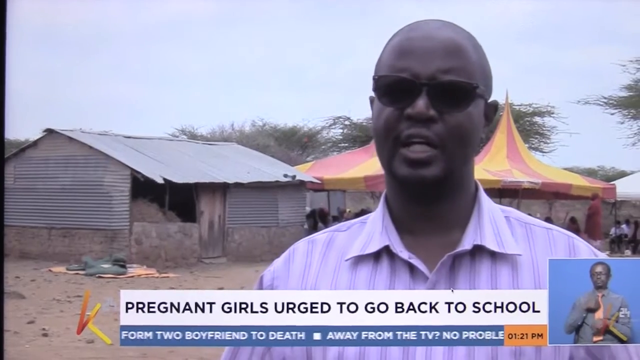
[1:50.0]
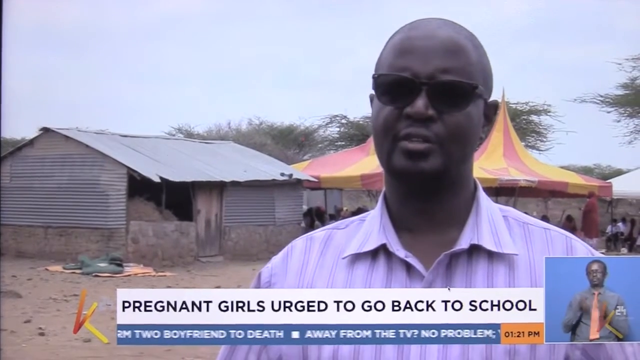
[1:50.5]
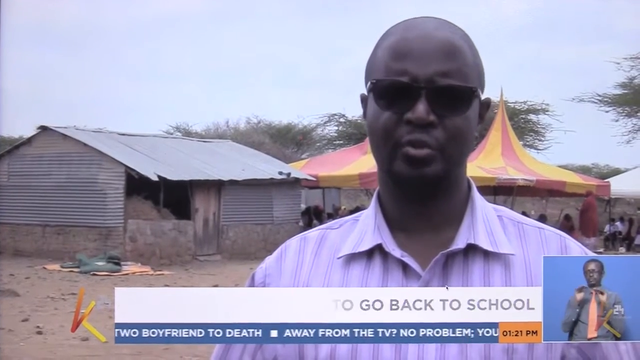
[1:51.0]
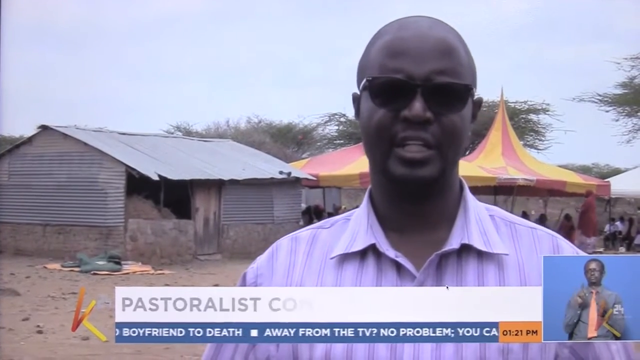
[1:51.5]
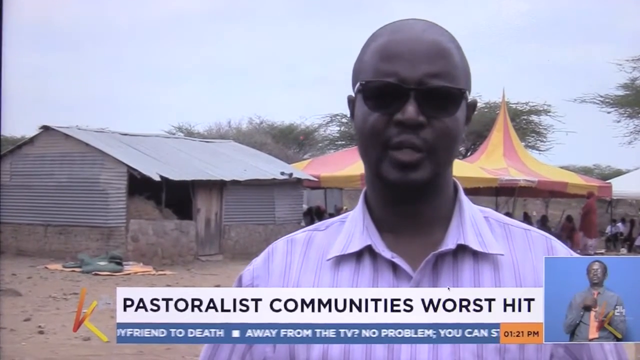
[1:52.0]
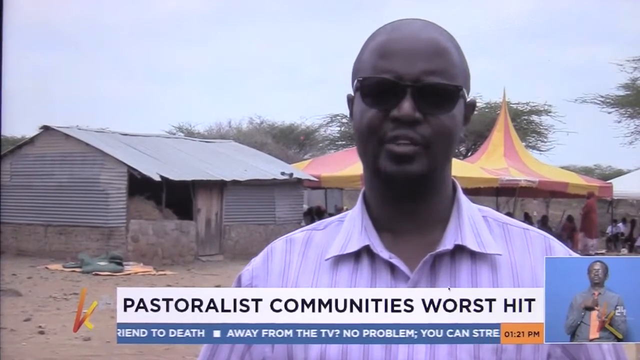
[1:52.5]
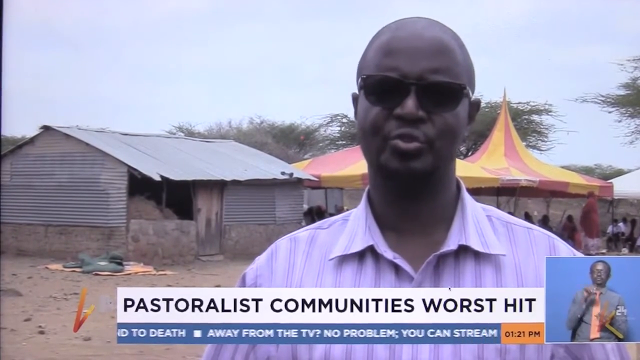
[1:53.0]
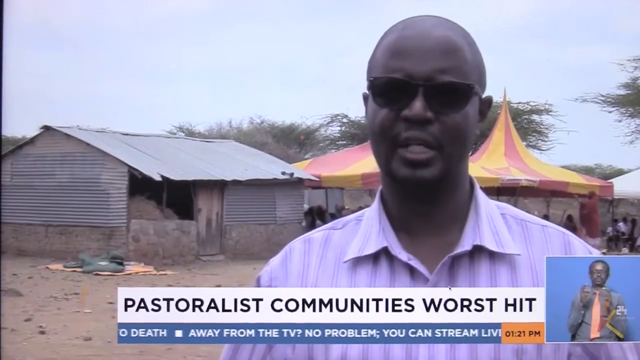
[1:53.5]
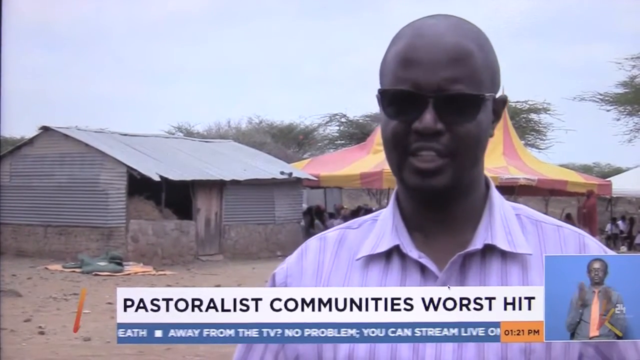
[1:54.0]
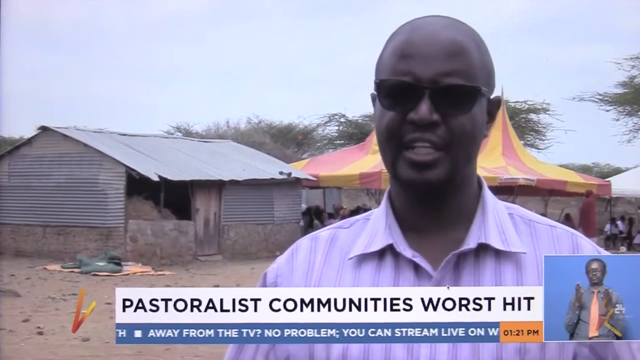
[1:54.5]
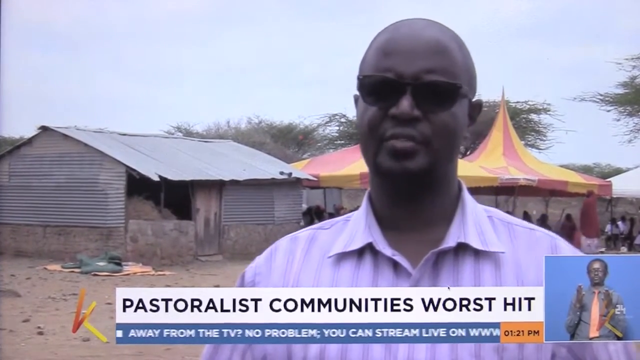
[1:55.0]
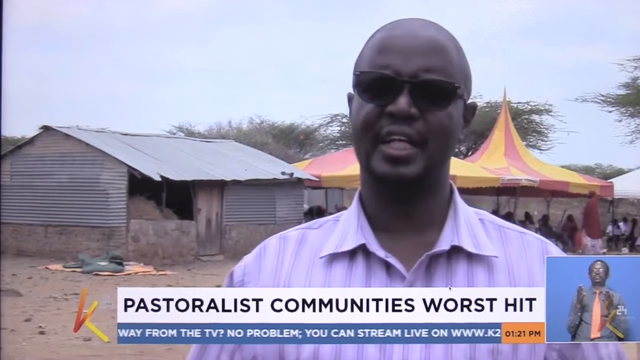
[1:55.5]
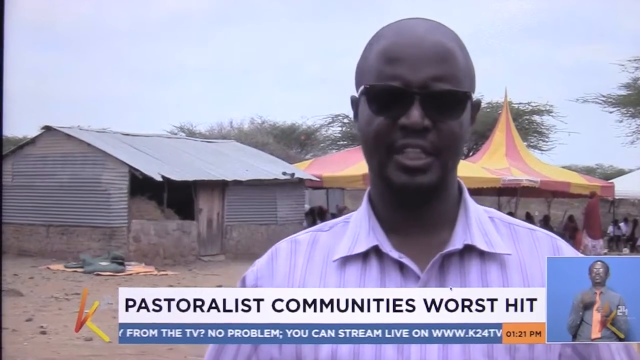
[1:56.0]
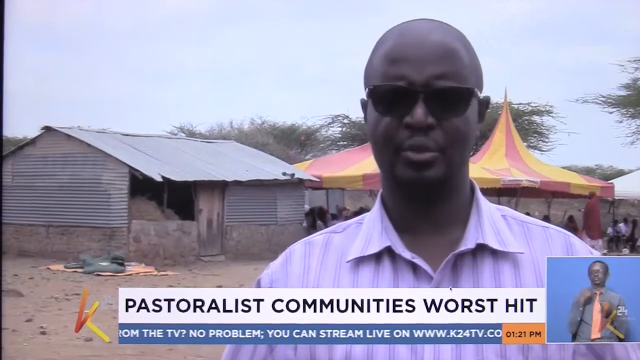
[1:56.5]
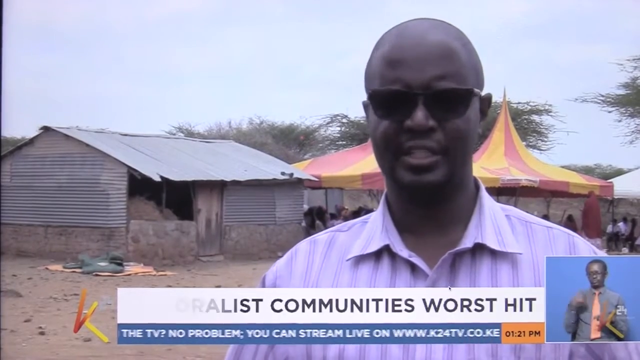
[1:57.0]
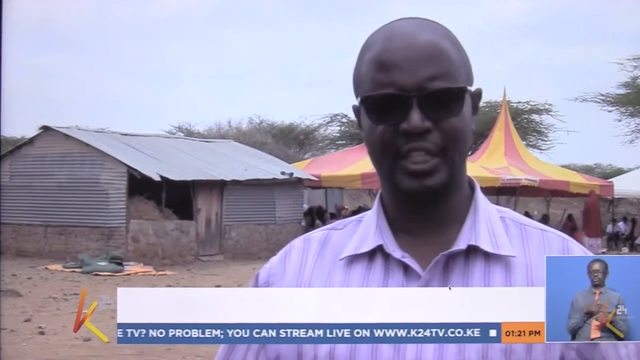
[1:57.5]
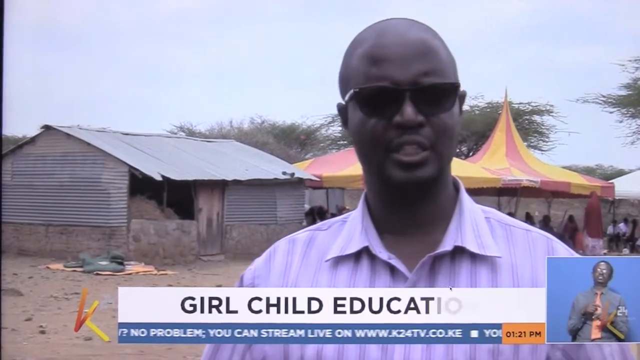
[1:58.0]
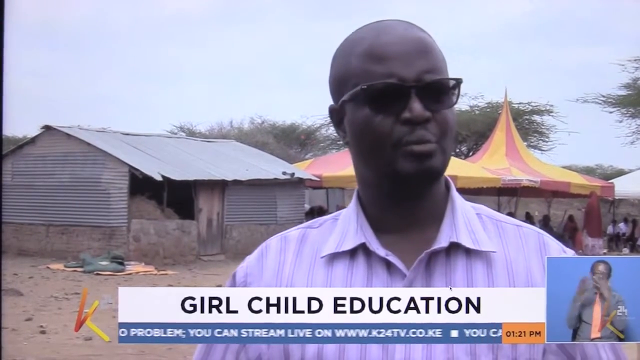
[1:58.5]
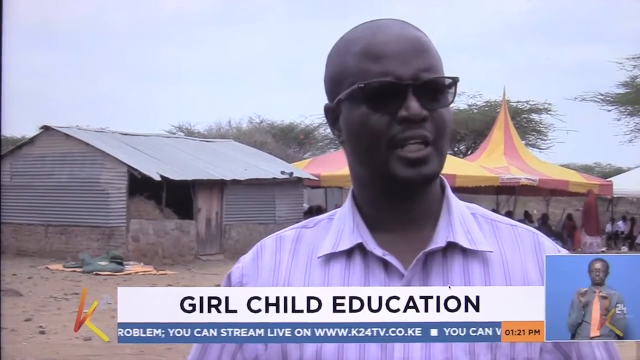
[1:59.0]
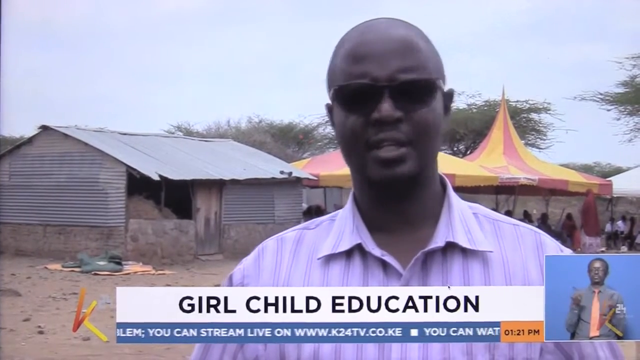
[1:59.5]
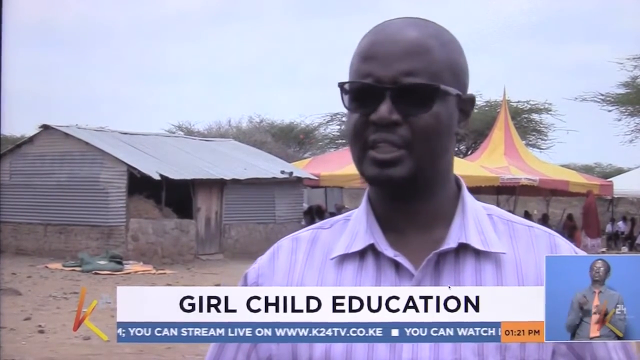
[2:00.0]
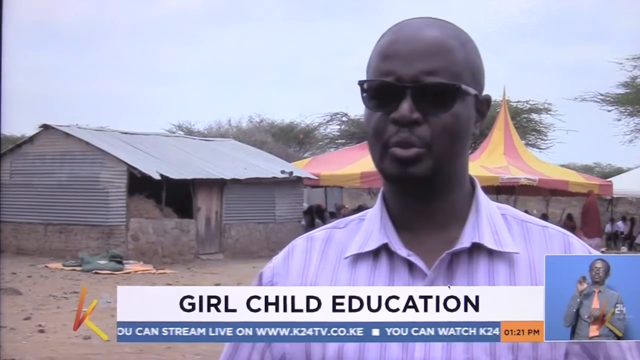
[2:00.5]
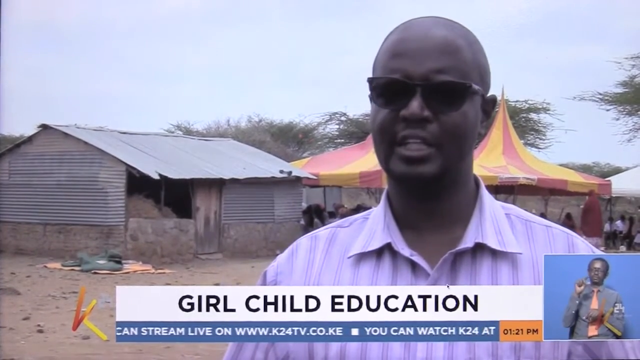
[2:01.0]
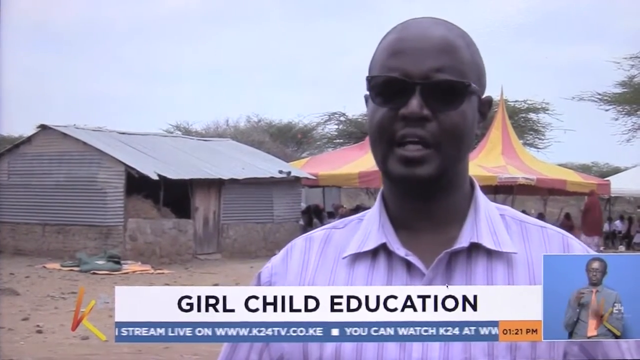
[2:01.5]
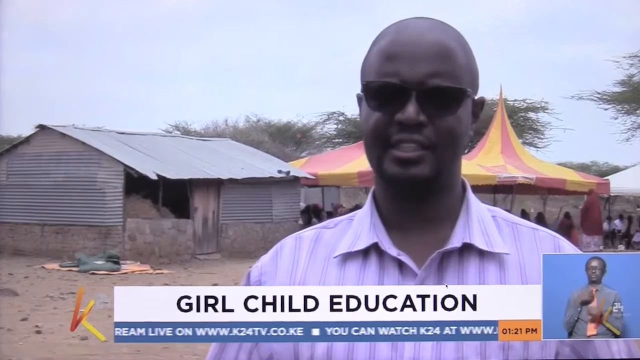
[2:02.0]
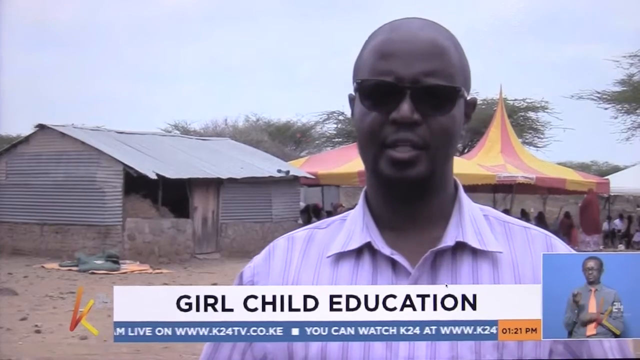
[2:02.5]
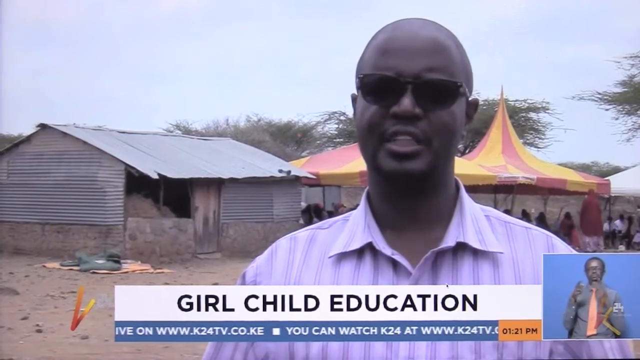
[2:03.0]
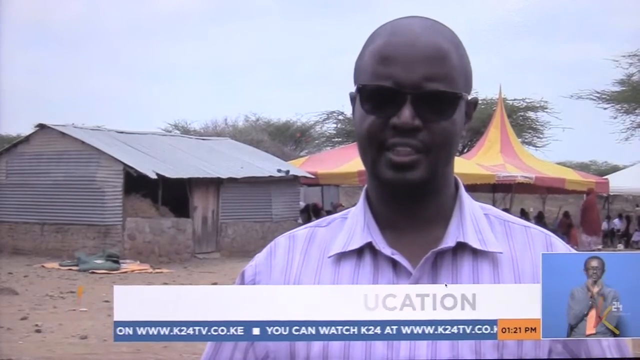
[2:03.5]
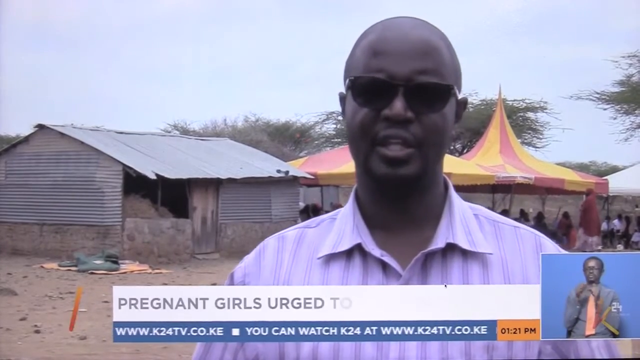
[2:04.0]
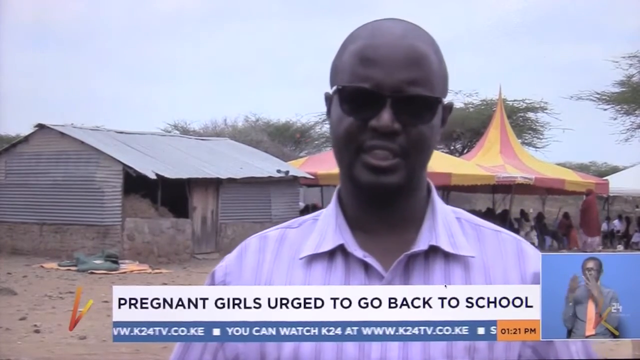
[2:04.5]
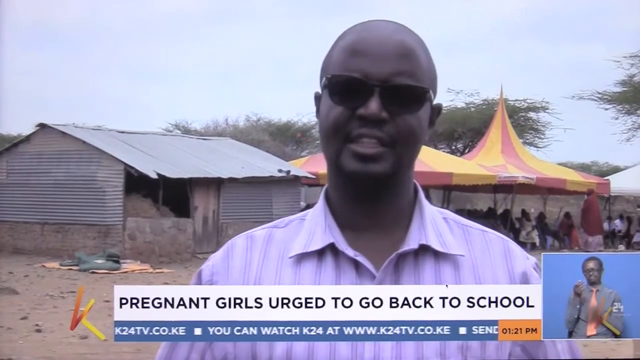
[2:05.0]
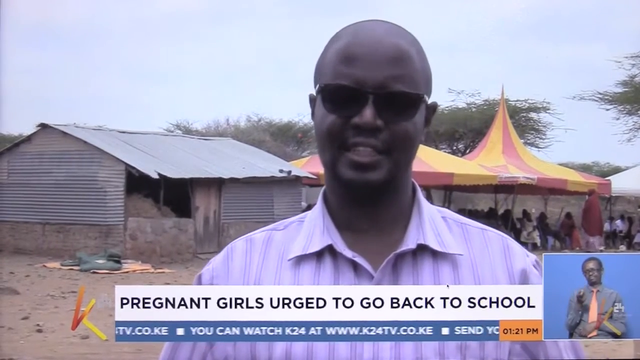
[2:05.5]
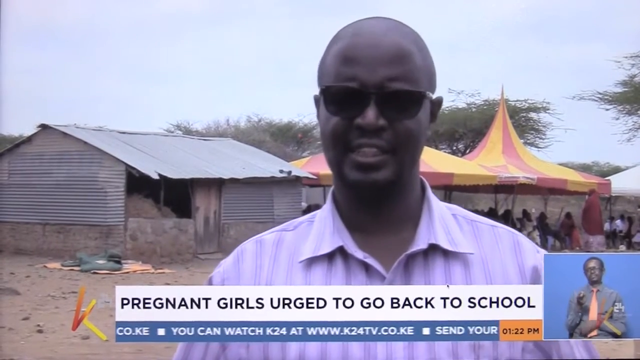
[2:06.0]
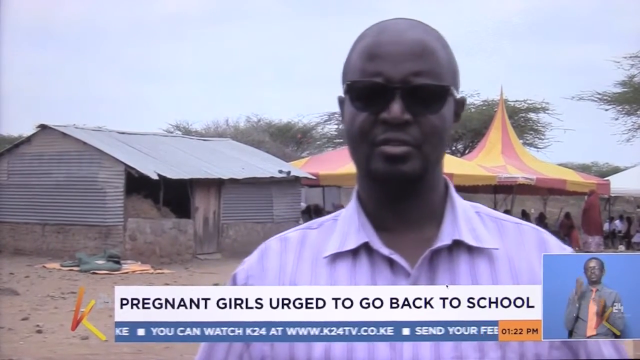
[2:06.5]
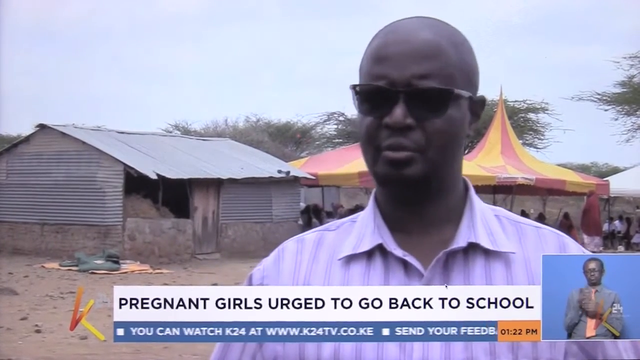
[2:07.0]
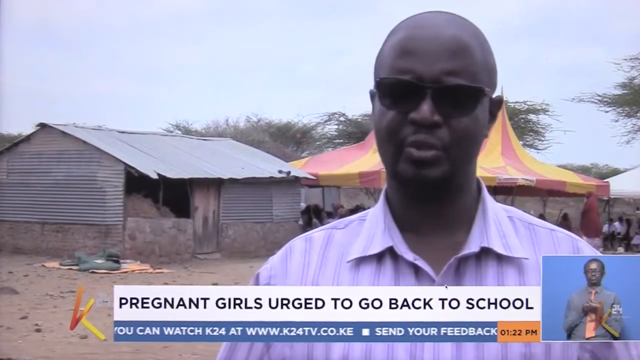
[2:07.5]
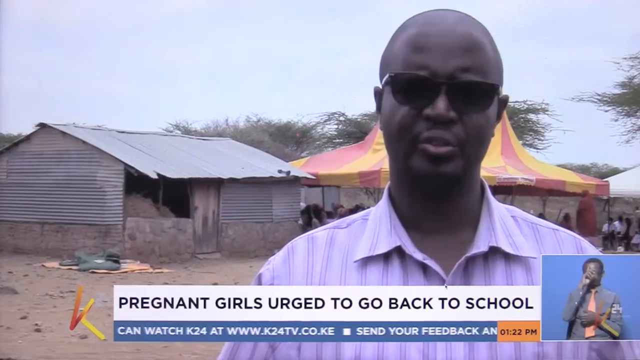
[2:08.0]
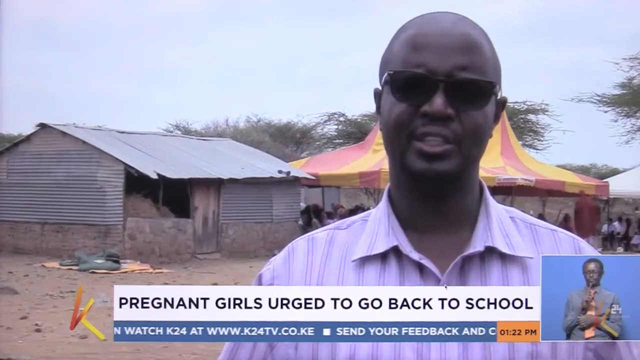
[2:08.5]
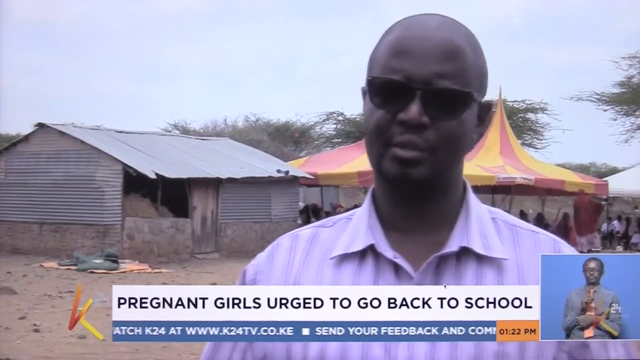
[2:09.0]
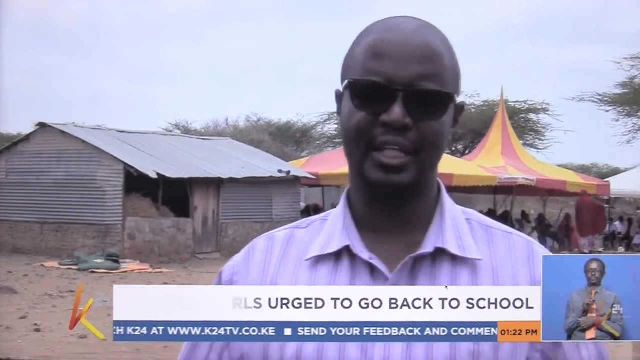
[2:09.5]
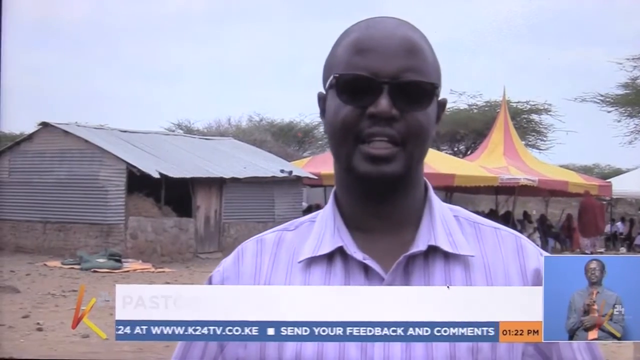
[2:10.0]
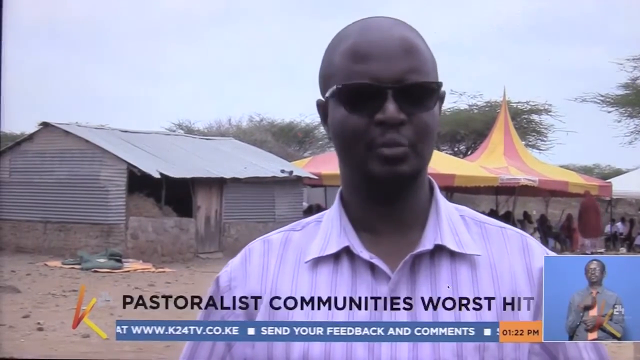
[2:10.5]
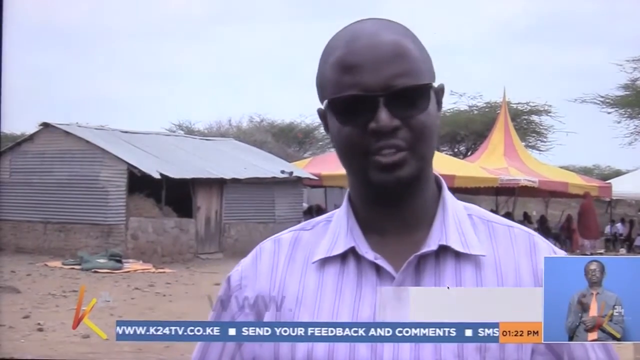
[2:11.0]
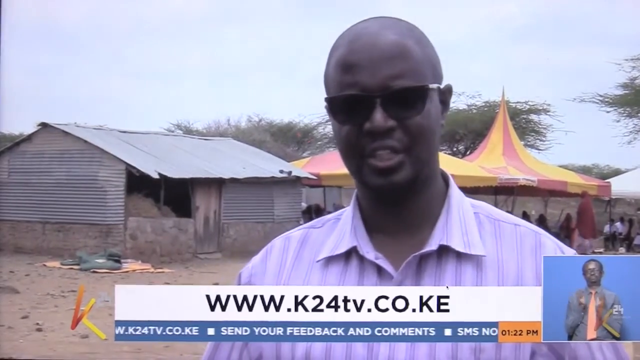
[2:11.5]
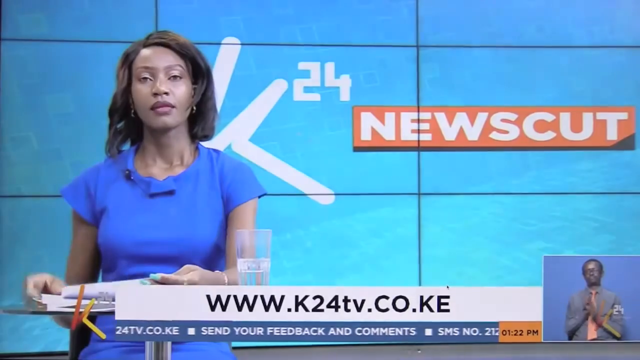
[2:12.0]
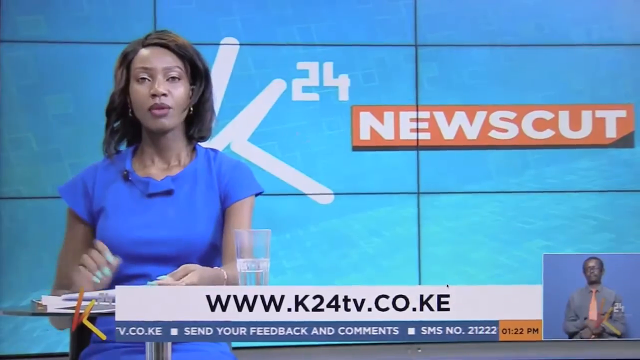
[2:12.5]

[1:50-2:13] The news story appears to be set in Africa, as all the individuals in it have dark skin. In a separate rectangle in the bottom right, a man with dark skin gives sign language against a blue background; he wears a long grey shirt and a pink or orange tie. A man being interviewed on camera wears a pink or purple shirt with vertical stripes and sunglasses, and has a shaved head and dark skin. The words "pregnant girls are to go back to school" appear in black text at the bottom of the screen. Behind him seems to be a circus tent or a carousel, with a red and yellow striped roof of a sort of sloping, upward shape. To the left of that is a shed, possibly used for farming. The black text at the bottom changes every so often, reading "pastoralist communities hit worse", "girl child education" and "pregnant girls urge to go back to school". The man continues talking, with some people in the background over his shoulder, including someone in red. The broadcast then returns to the news reporter at her desk, wearing a blue shirt.